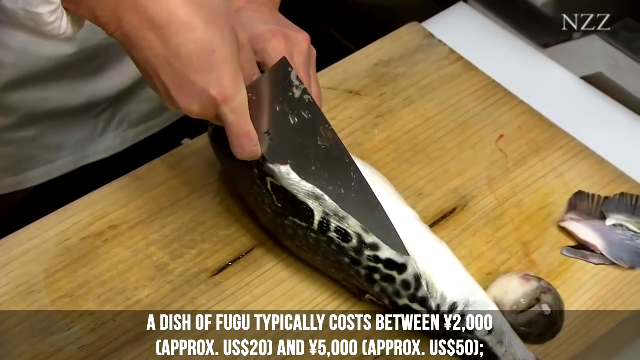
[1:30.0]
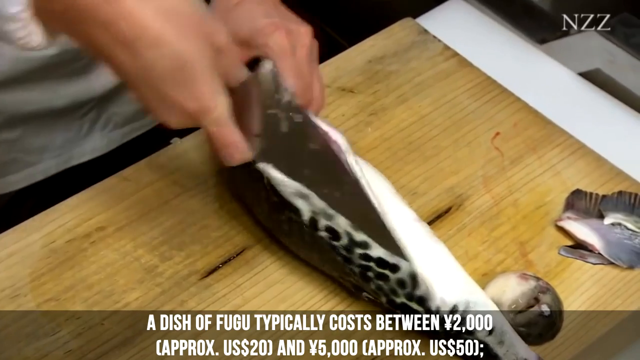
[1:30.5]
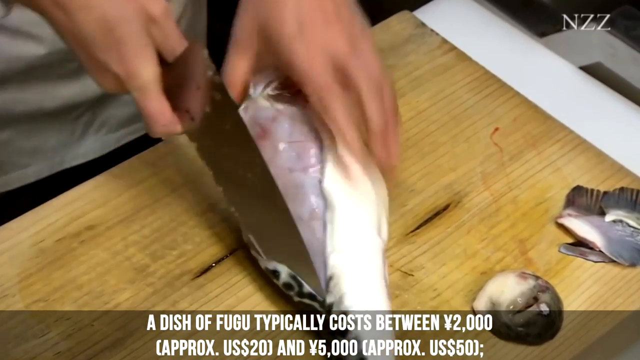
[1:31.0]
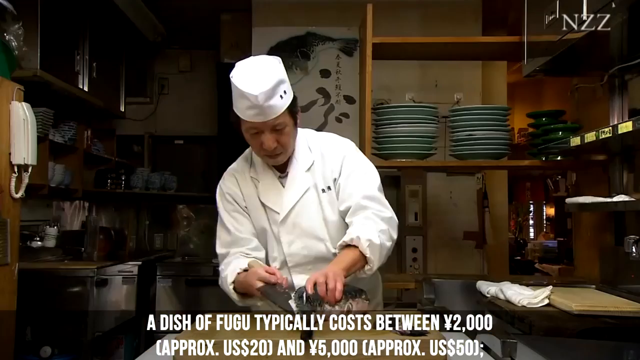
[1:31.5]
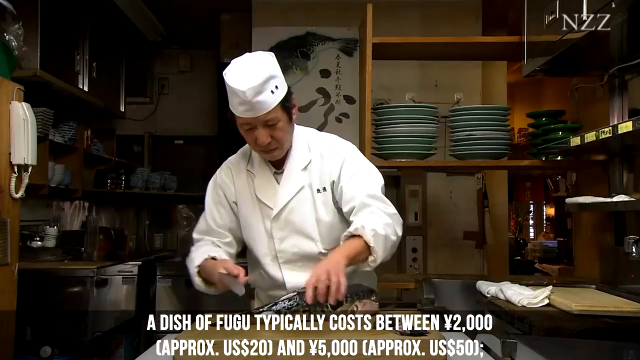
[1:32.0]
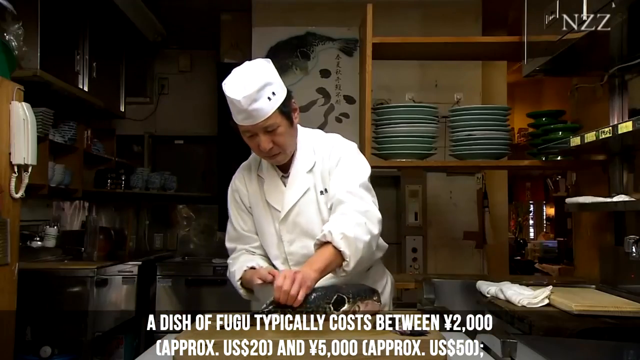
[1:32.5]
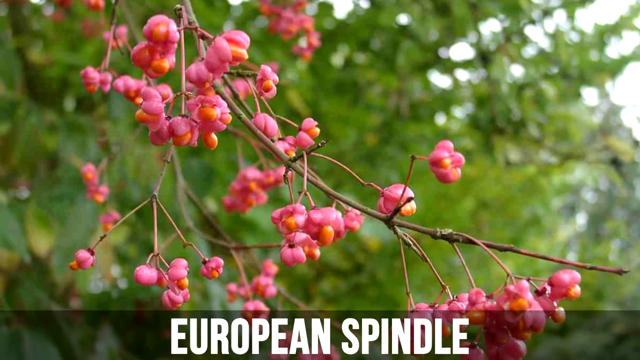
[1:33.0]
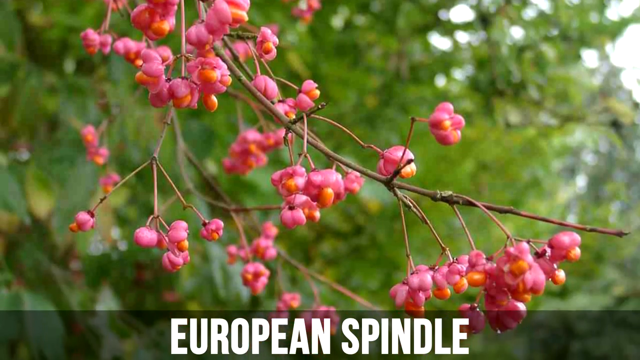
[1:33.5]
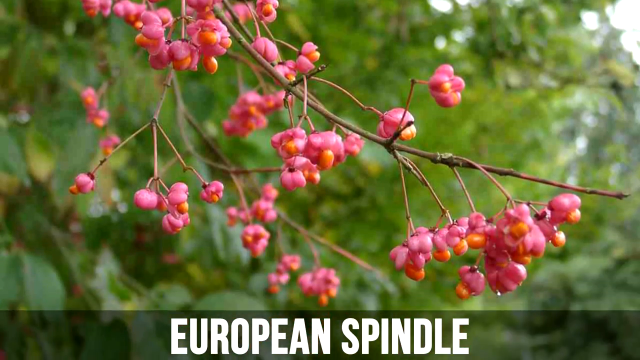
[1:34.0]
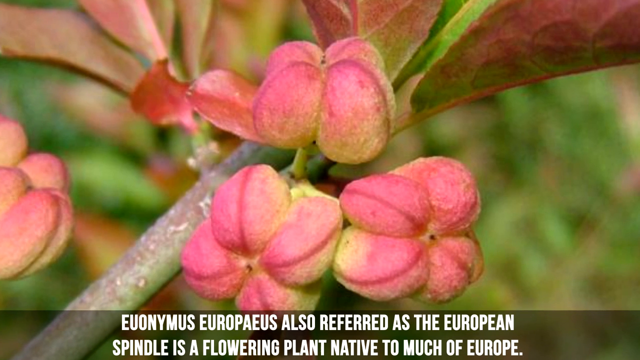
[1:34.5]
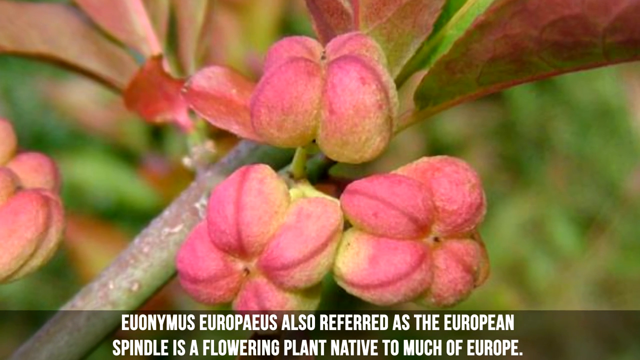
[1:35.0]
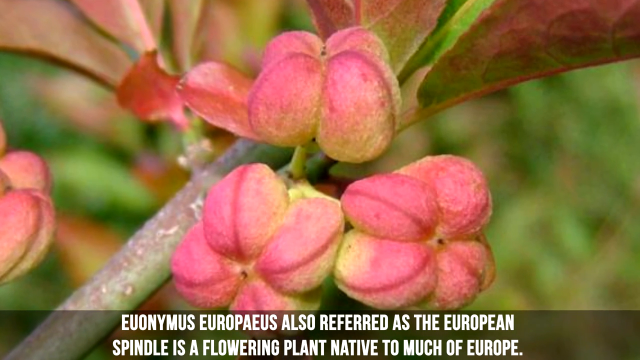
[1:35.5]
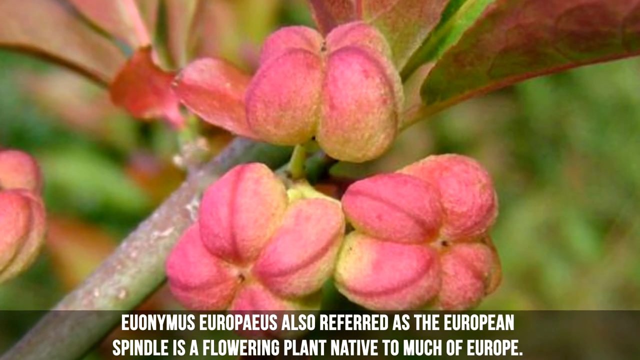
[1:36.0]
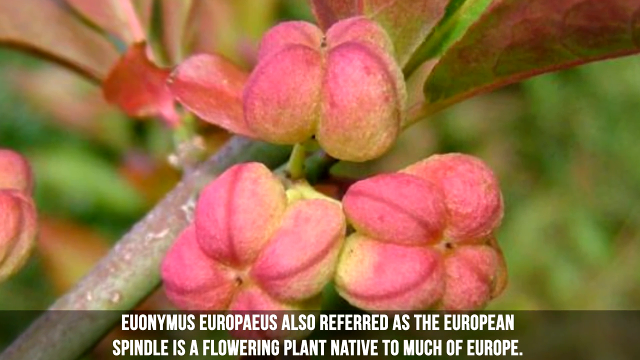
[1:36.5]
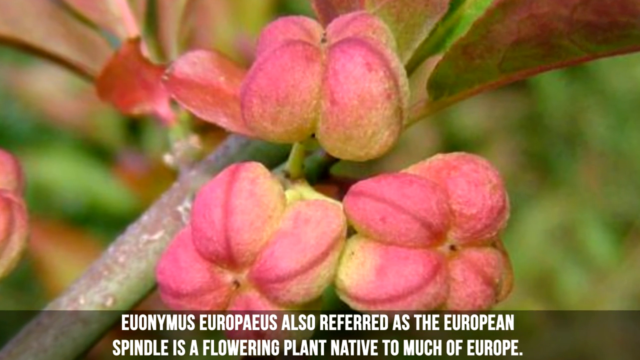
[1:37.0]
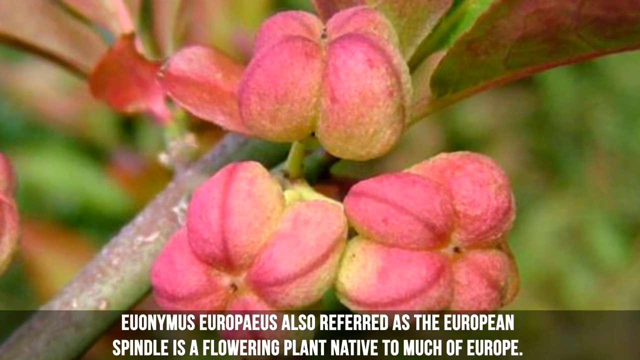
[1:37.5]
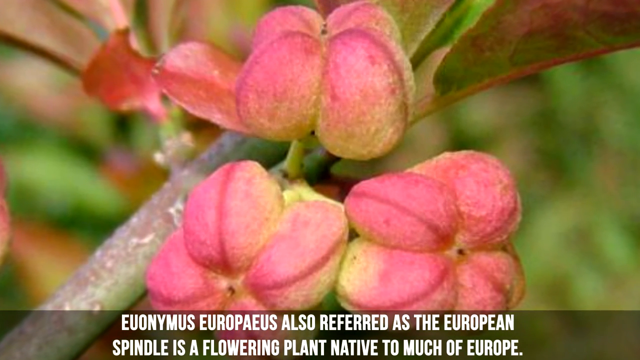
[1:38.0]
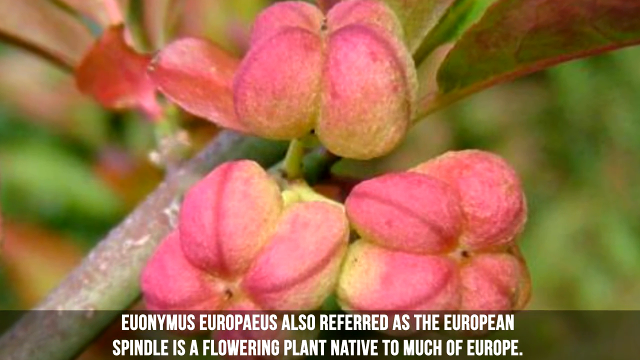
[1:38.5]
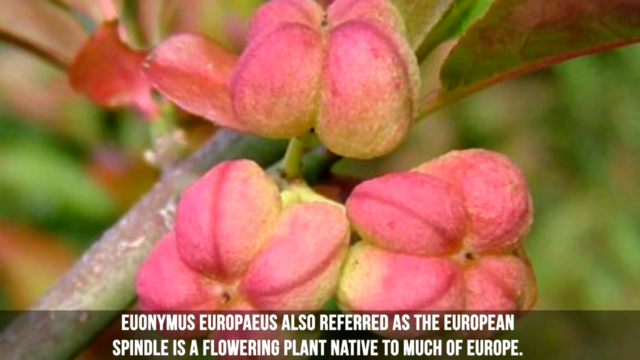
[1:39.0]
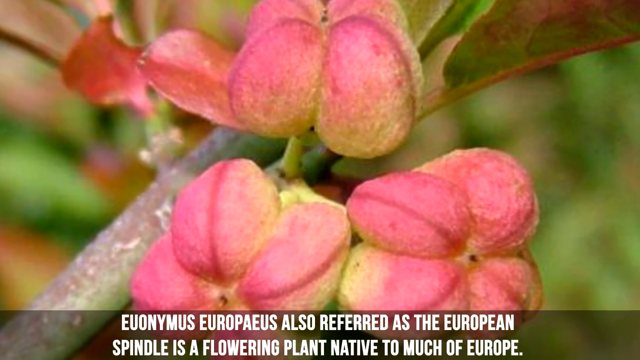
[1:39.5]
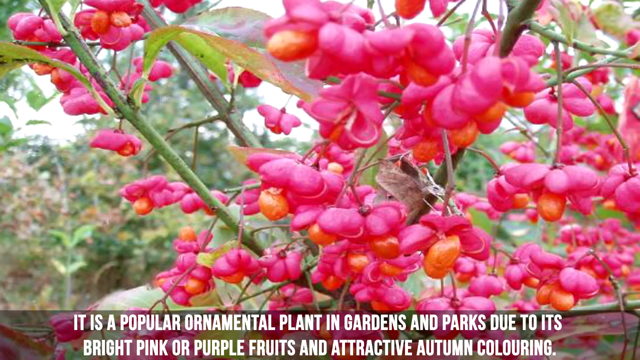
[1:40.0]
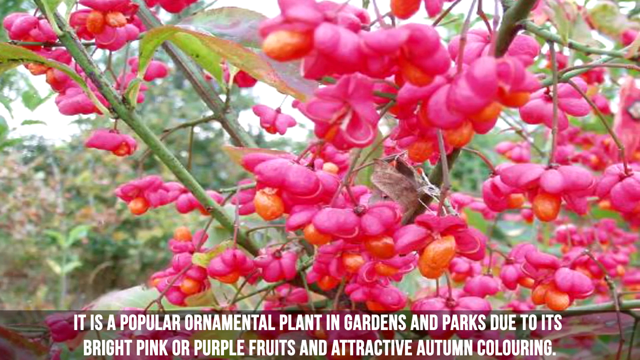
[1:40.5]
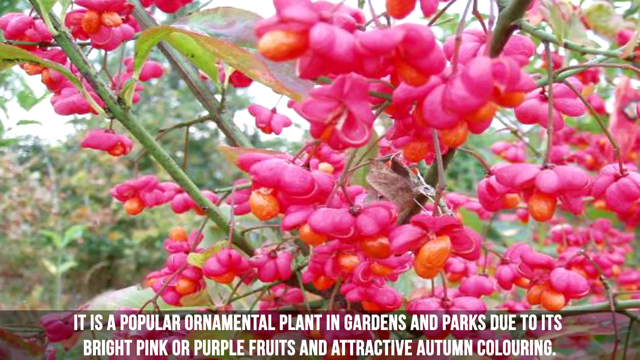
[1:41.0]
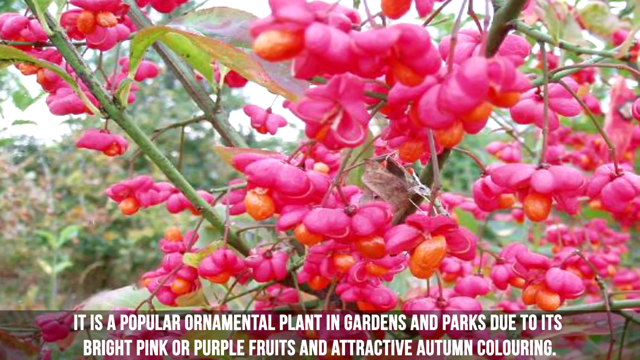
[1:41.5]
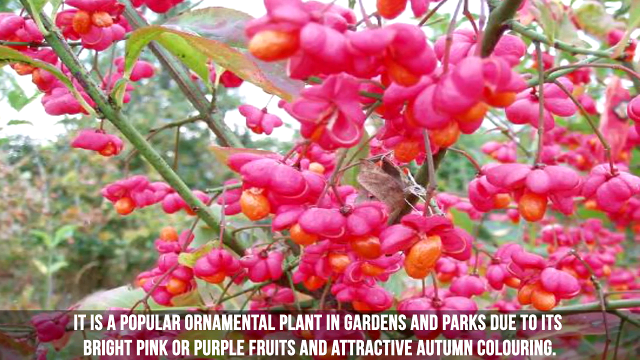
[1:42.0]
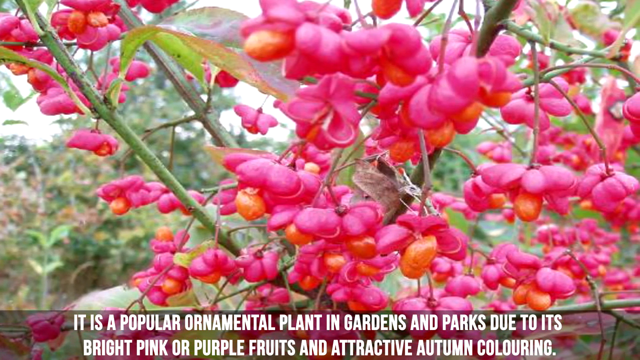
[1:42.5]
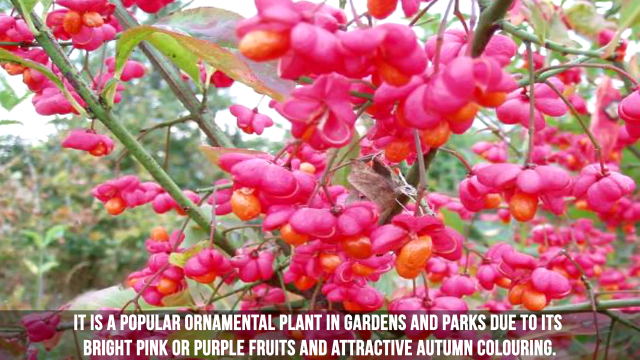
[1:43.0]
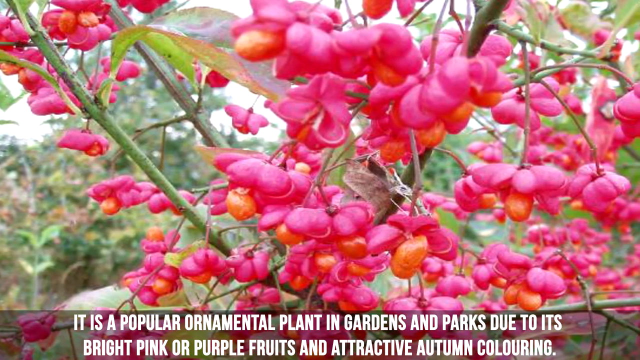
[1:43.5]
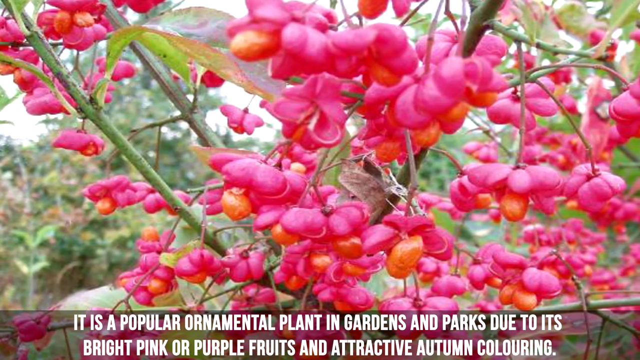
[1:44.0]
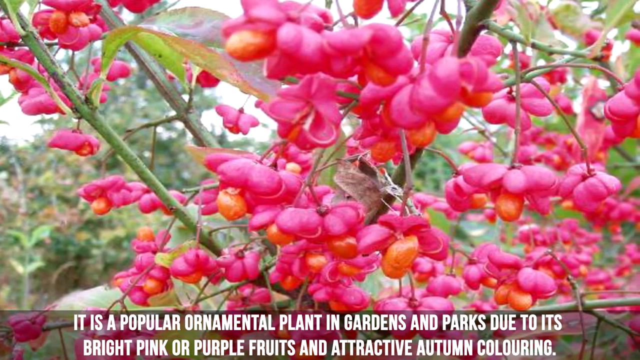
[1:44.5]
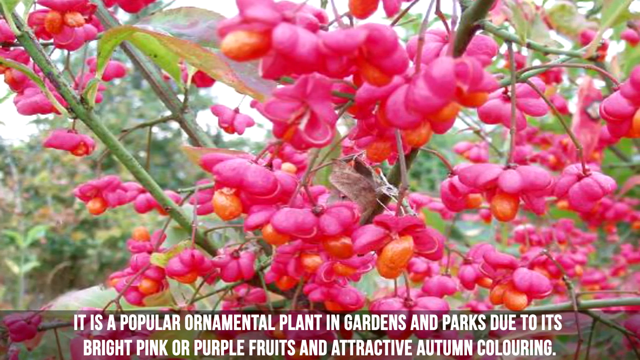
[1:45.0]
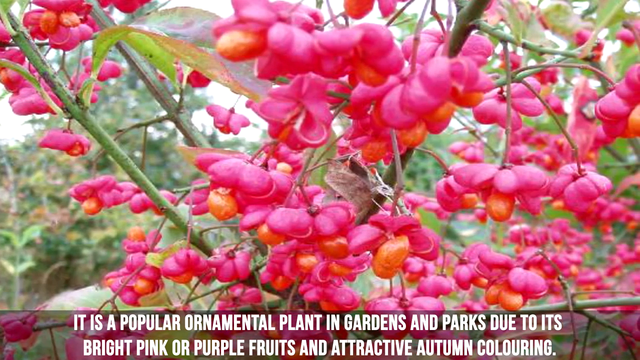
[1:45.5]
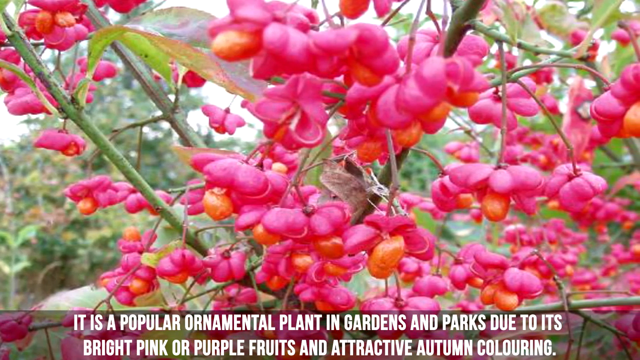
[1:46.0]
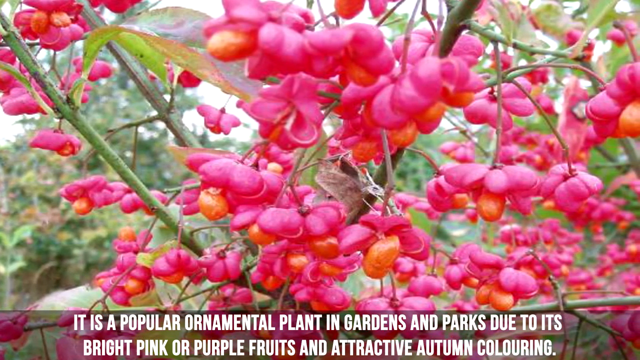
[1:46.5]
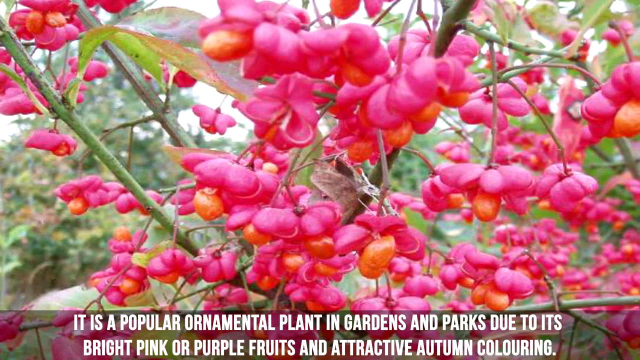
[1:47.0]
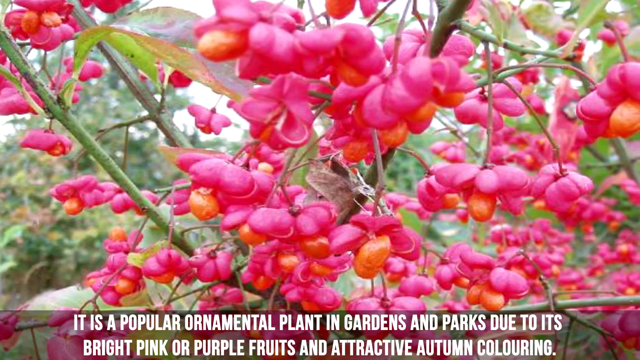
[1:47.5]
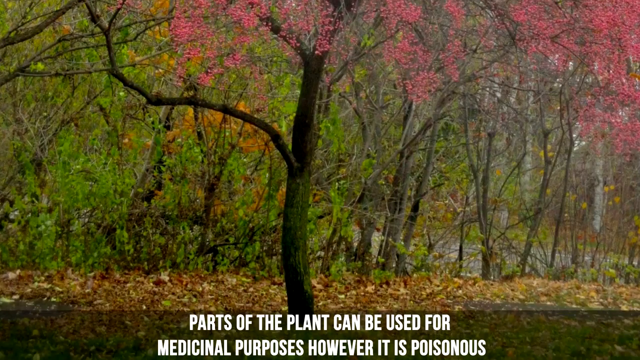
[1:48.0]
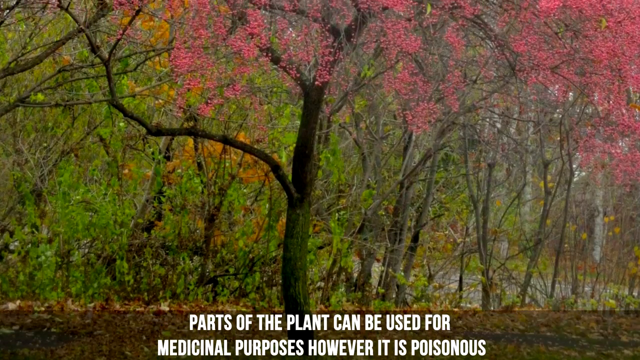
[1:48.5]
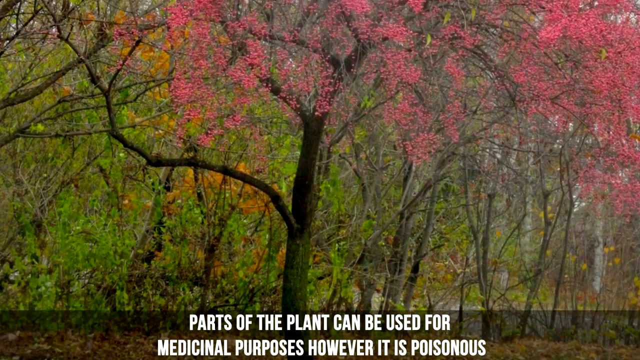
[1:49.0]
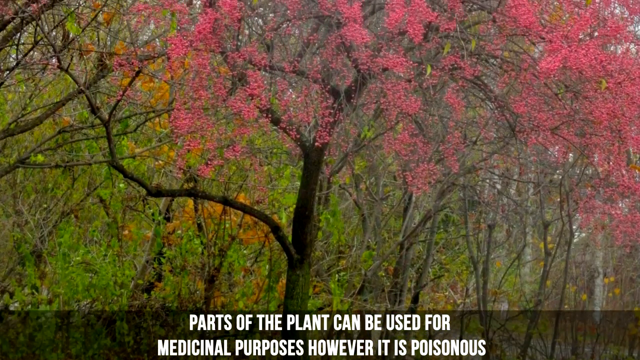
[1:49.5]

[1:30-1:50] The Japanese chef continues dissecting the fish. The video then cuts to a plant that appears to have pink flowers on it. The text says it is a popular oriental plant in gardens and parks, with pink or purple fruits and attractive autumn coloring, and that parts of the plant can be used for medicinal purposes but it is poisonous. It looks like a tree with purple or pink fruit and flowers, and the text says it is also referred to as a European spindle.